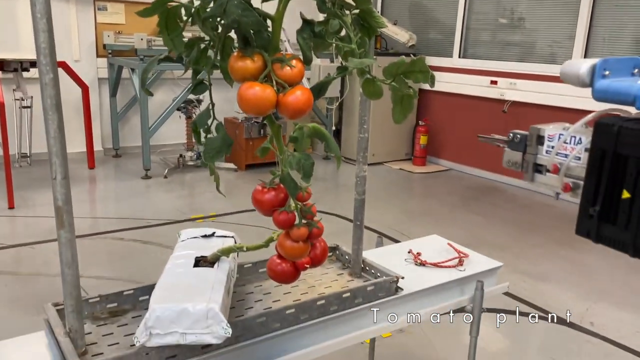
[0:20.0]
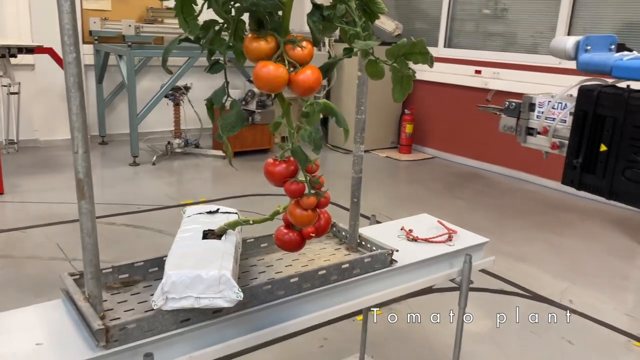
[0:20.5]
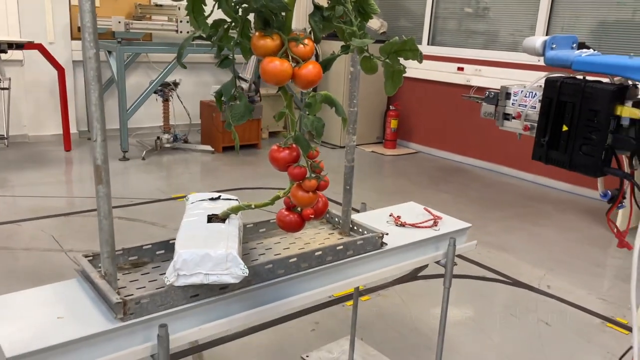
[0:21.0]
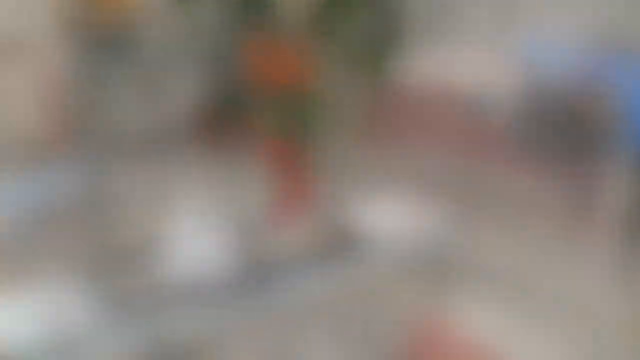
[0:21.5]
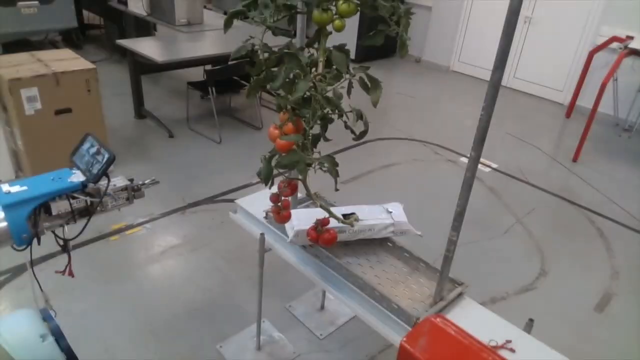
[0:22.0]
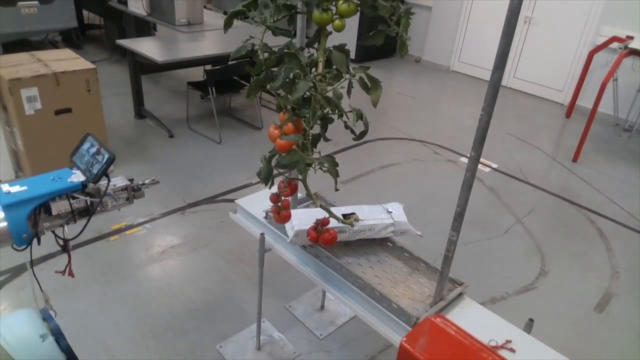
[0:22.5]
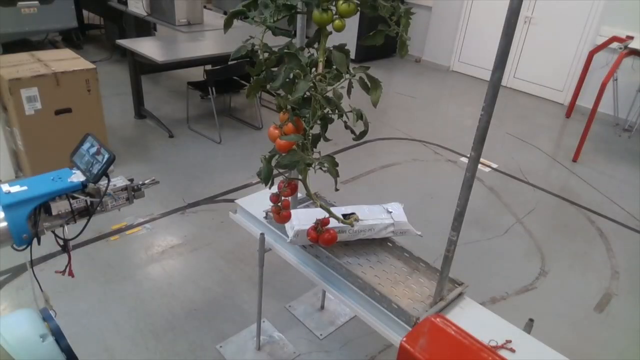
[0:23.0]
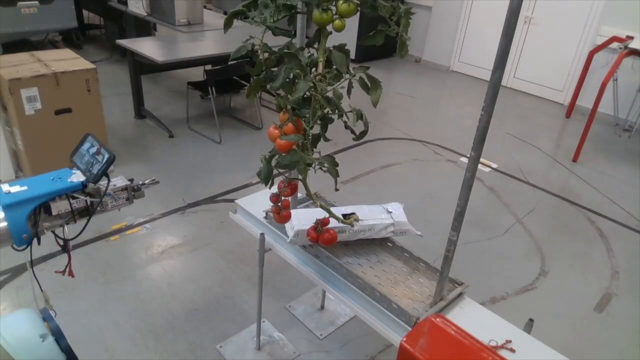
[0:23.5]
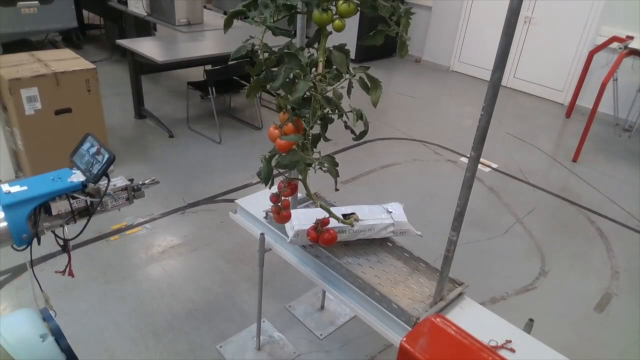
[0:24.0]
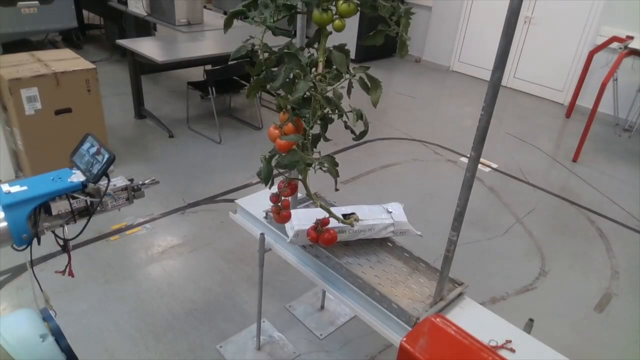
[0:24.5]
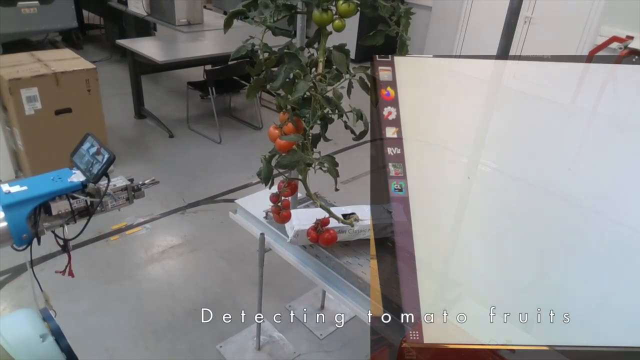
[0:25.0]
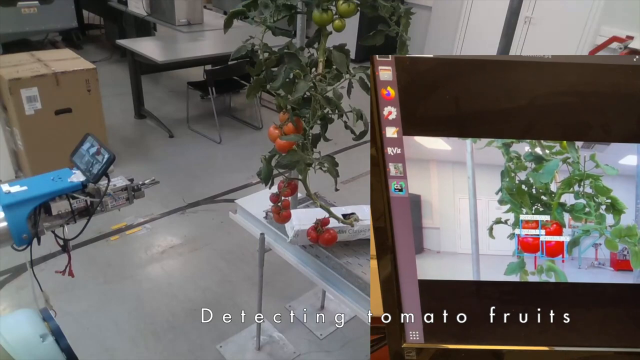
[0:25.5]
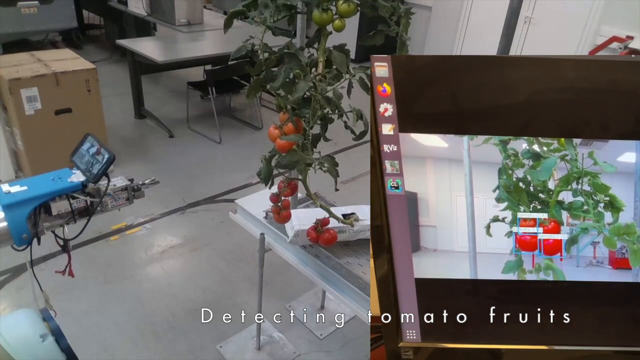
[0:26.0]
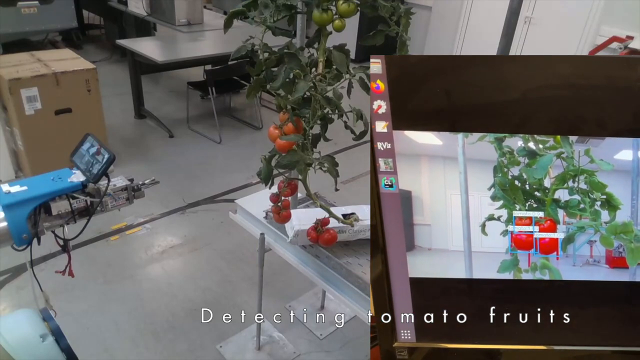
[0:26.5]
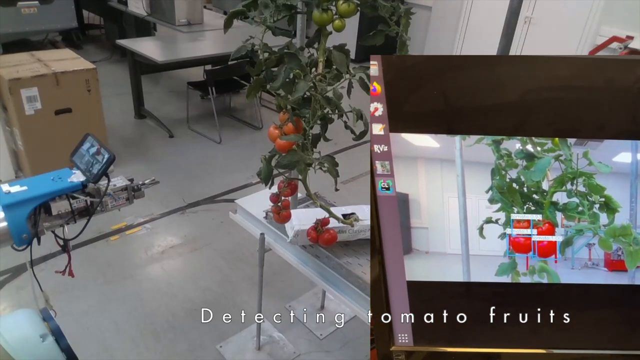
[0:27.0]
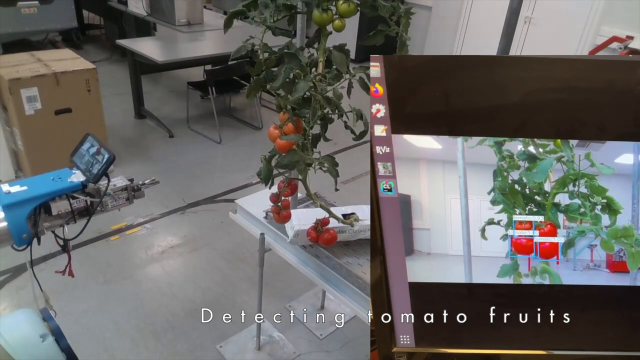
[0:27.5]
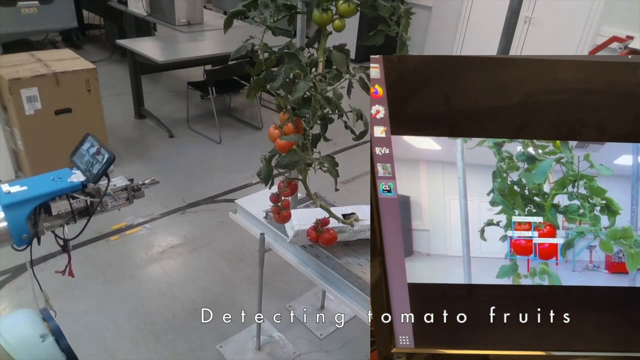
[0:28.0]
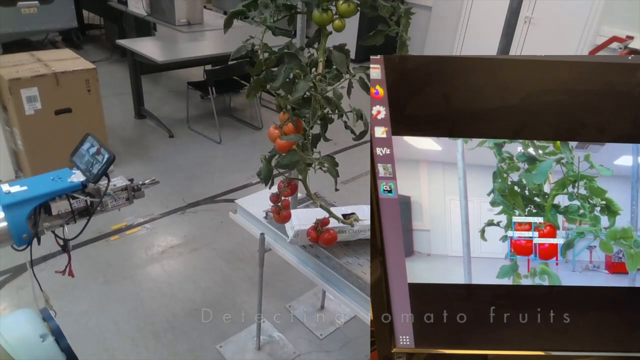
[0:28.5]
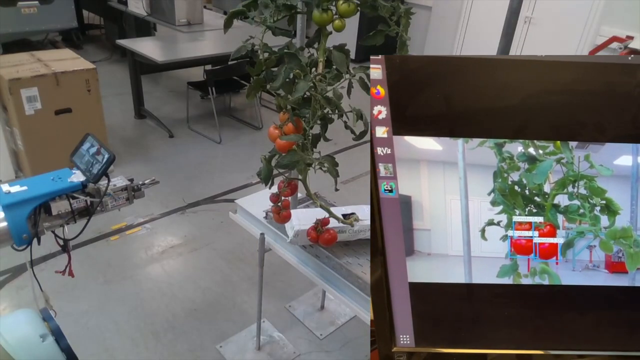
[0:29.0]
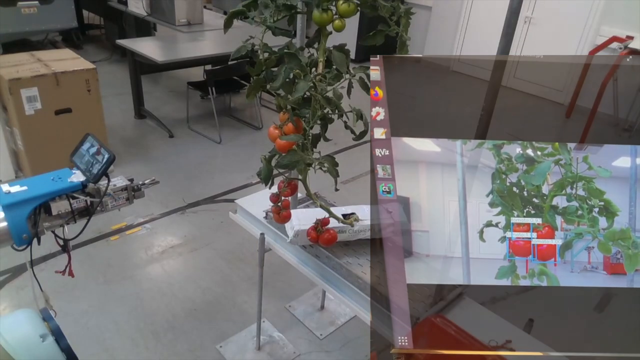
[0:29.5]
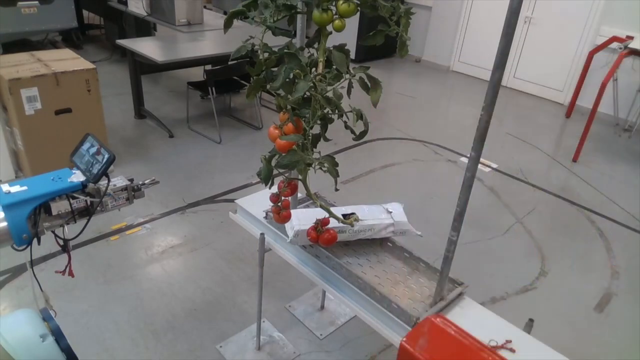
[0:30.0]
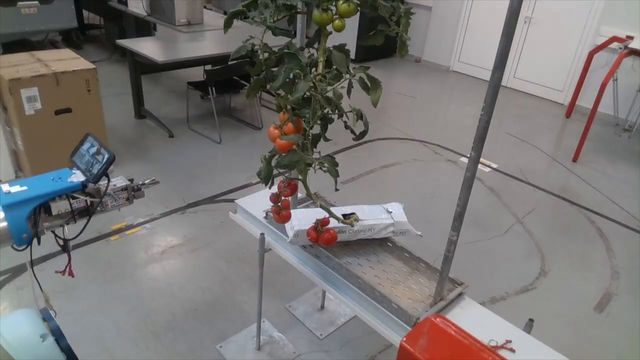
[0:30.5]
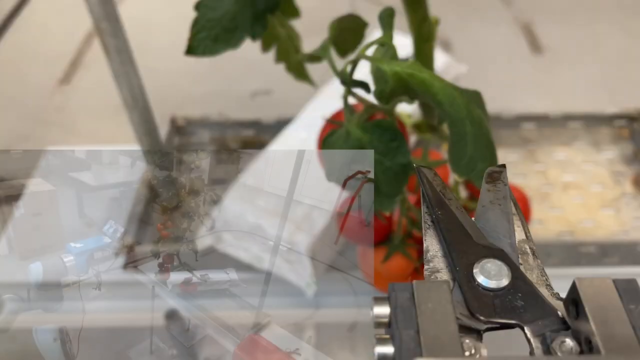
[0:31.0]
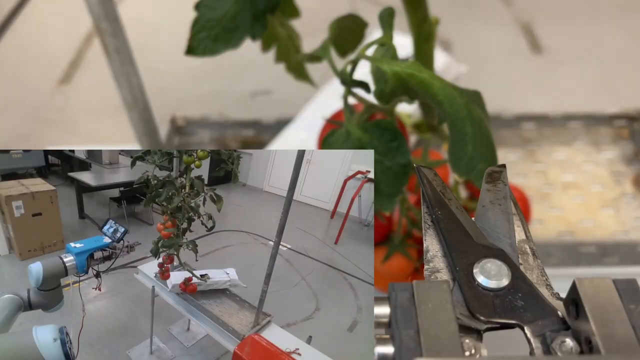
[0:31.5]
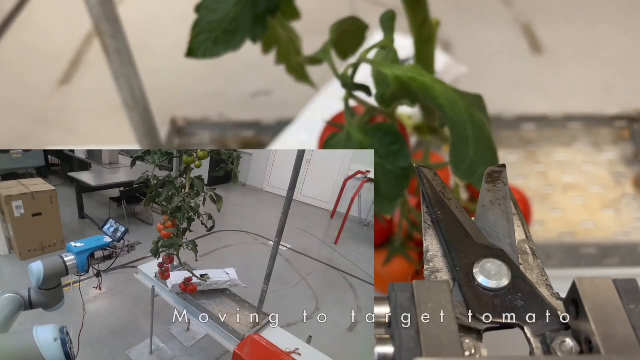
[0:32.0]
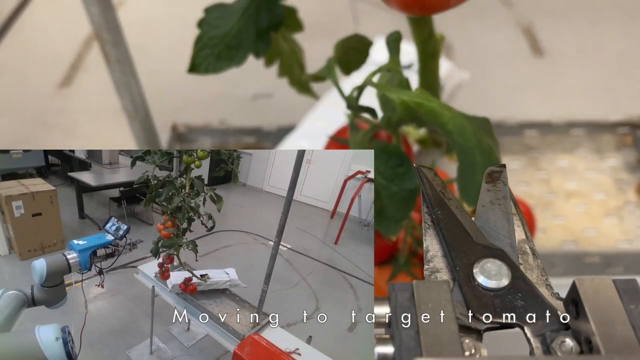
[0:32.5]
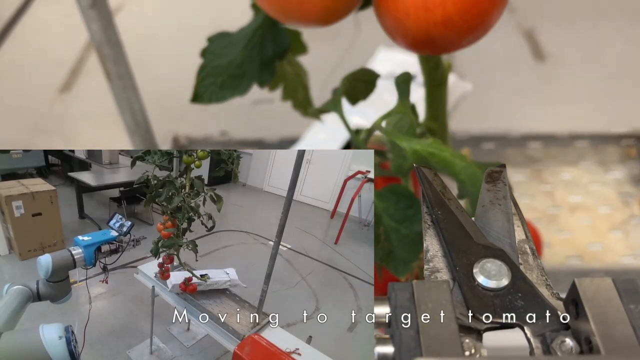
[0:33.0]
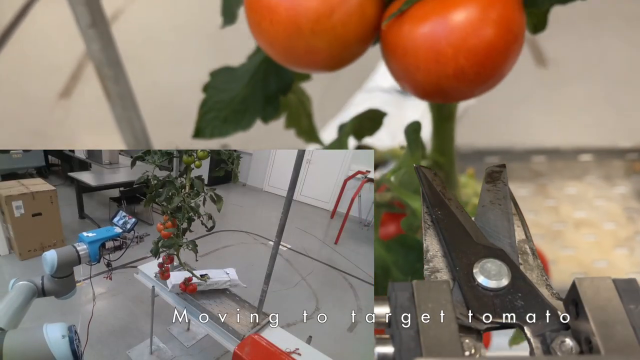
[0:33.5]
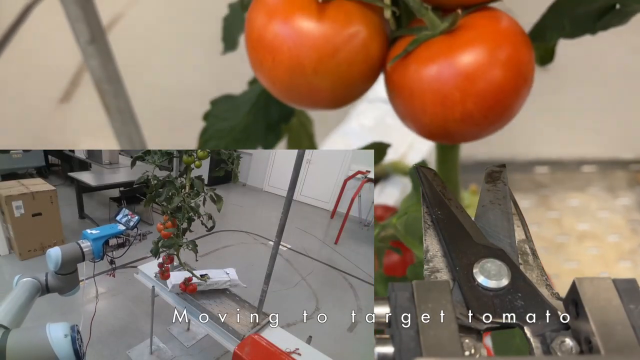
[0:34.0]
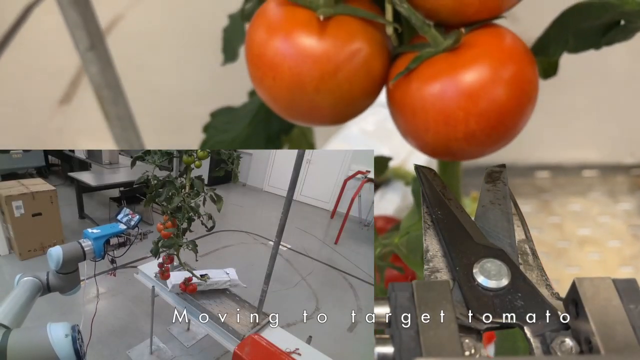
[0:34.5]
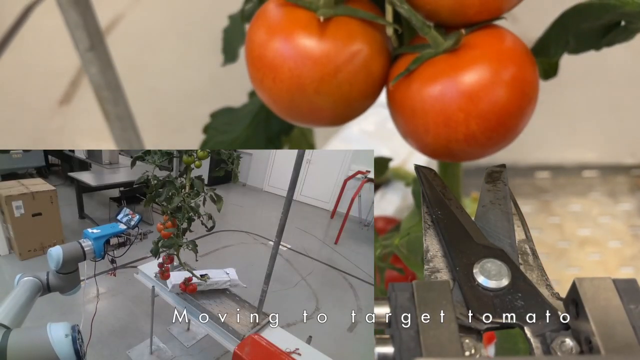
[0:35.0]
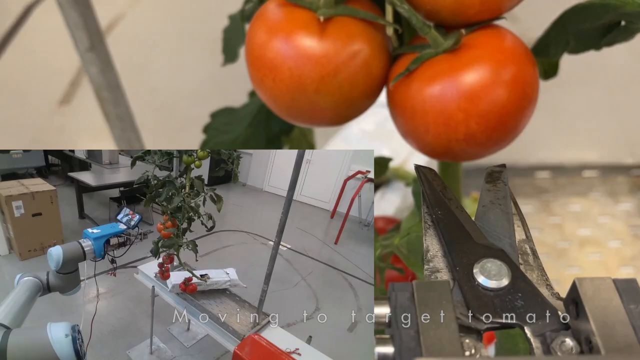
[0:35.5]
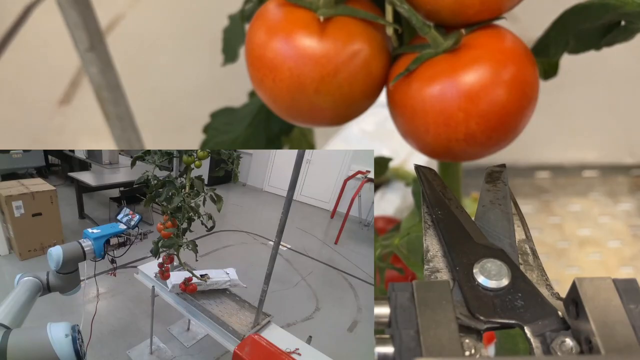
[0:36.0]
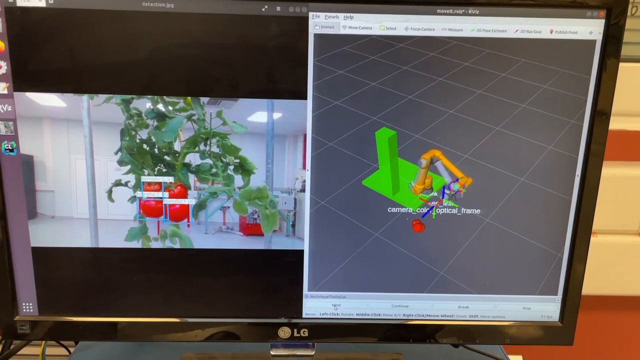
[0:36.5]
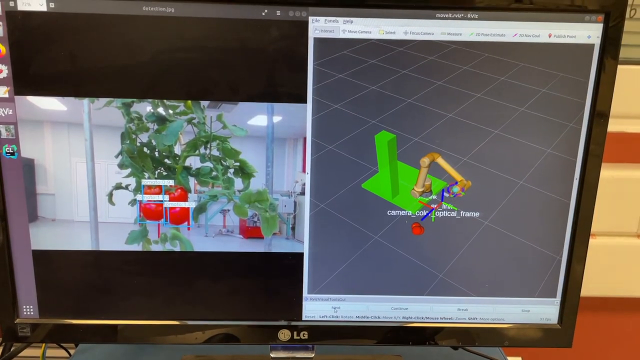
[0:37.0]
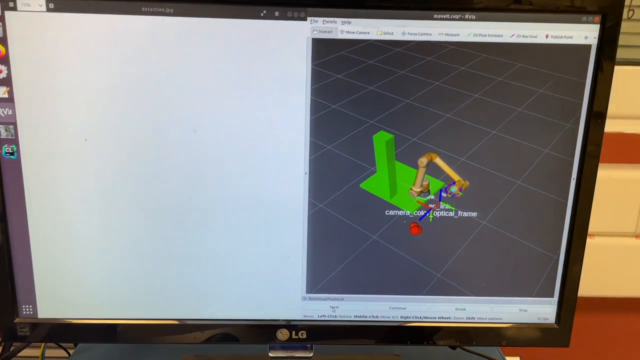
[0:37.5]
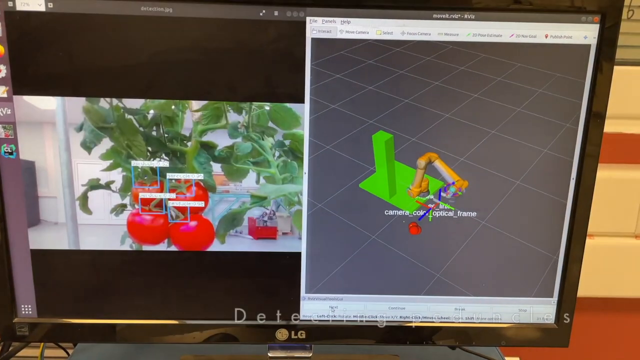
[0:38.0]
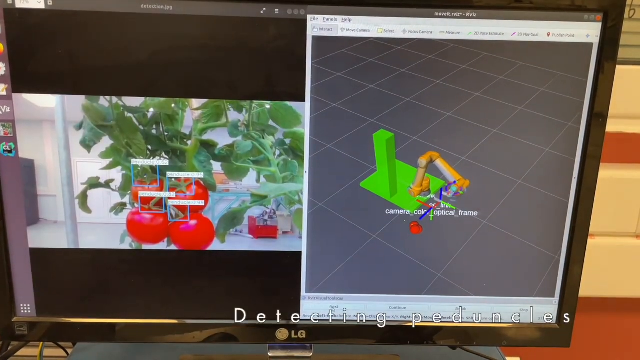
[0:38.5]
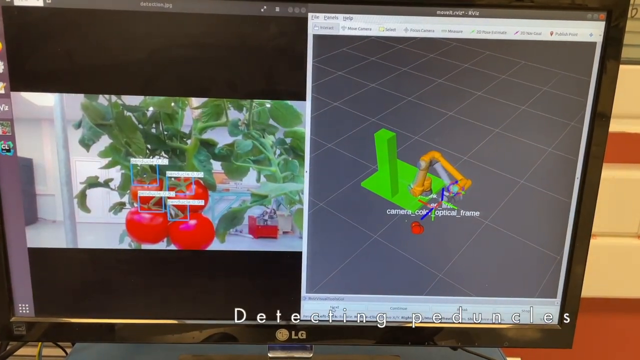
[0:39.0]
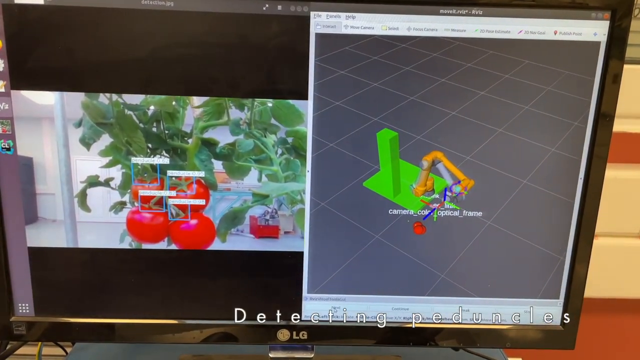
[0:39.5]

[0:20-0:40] A single tomato plant comes out of a growing bag that has been placed on a table between two metal poles, with a robotic piece of equipment facing it. The video then changes direction to show the same tomato plant and equipment from an above view, looking sideways on. A split screen appears showing a laptop screen on the right-hand side, where precision boxes highlight the tomato fruits, and text at the bottom reads "detecting tomato fruits." The scene then changes to show the tomato plant from the perspective of the precision arm on the robotic equipment. The precision arm looks like a small pair of scissors and heads forward toward the tomato plant. Text at the bottom reads "moving to target tomato," and in the bottom left-hand corner a screen shows a wider view of the equipment in action. The video then changes to a different scene showing a laptop screen with a close-up of the tomato plant, where detection boxes highlight where the stems are on the tomatoes.